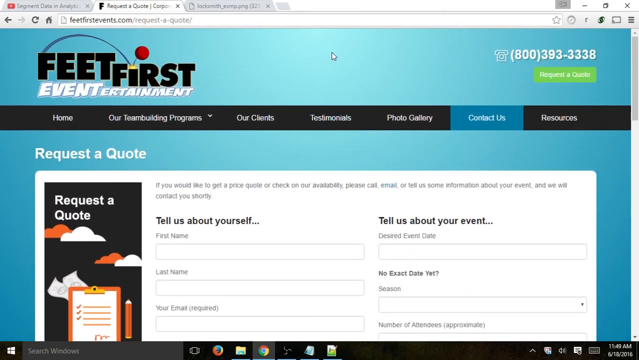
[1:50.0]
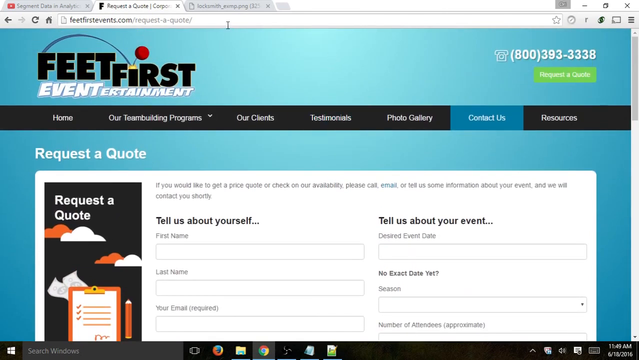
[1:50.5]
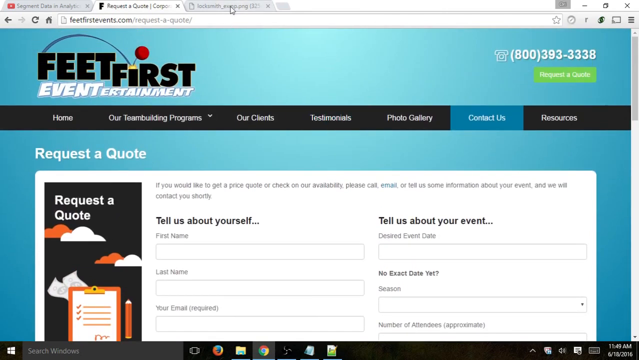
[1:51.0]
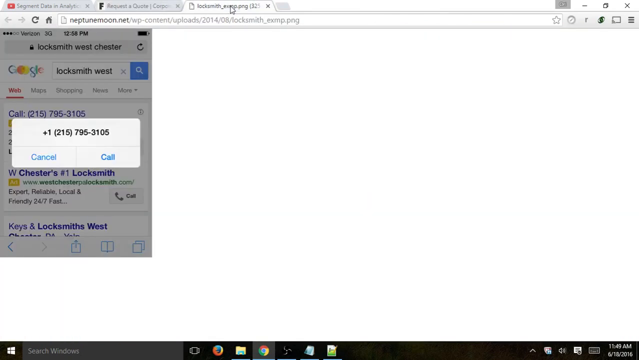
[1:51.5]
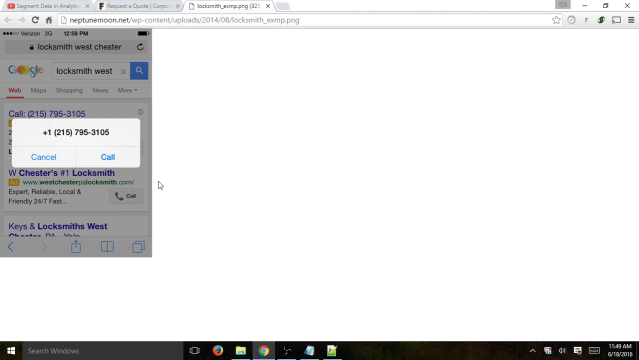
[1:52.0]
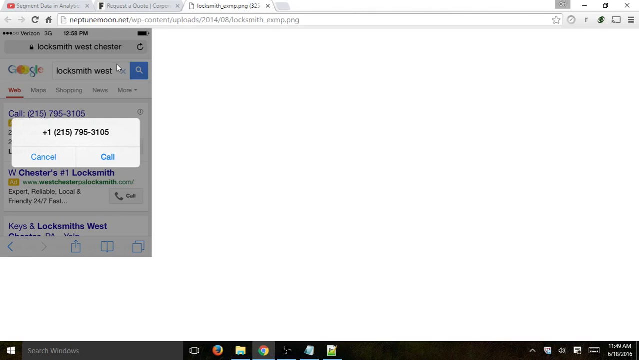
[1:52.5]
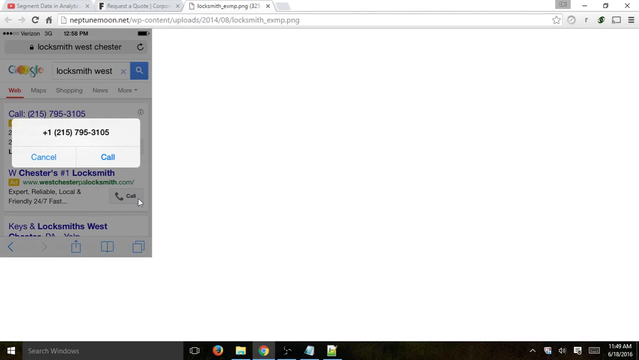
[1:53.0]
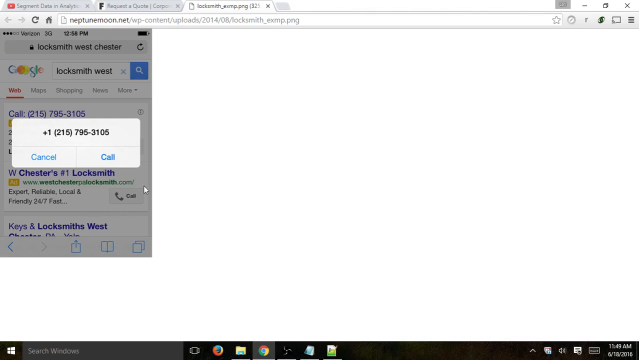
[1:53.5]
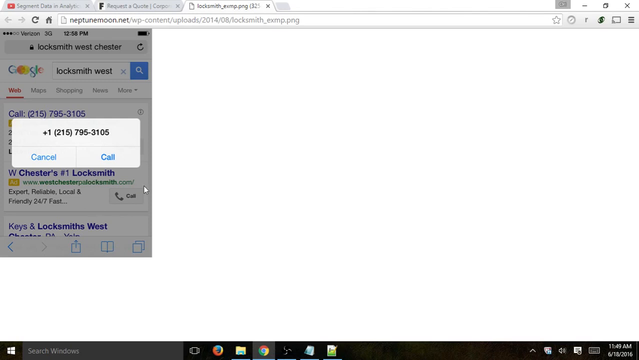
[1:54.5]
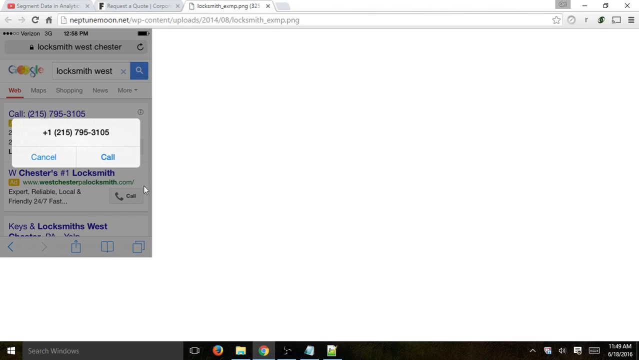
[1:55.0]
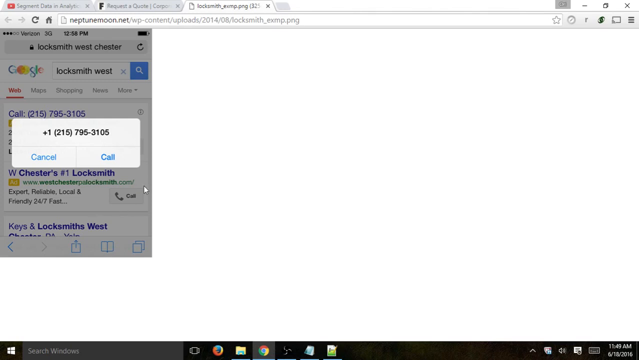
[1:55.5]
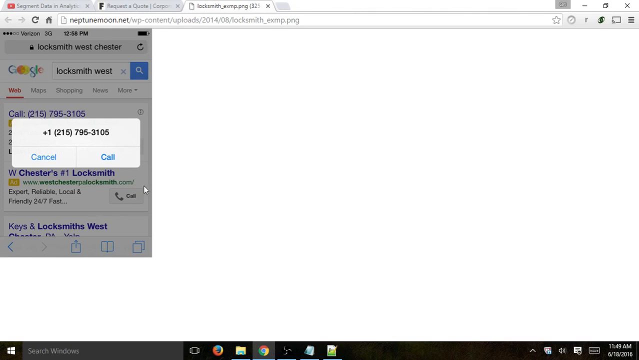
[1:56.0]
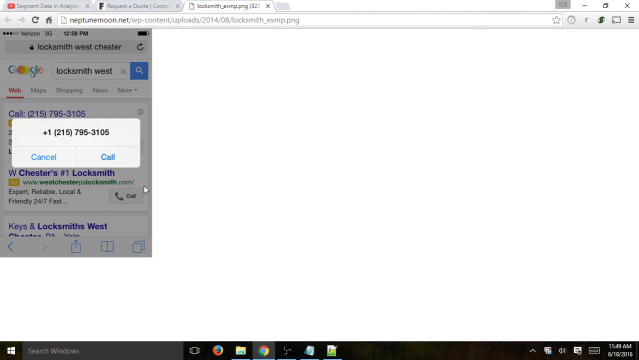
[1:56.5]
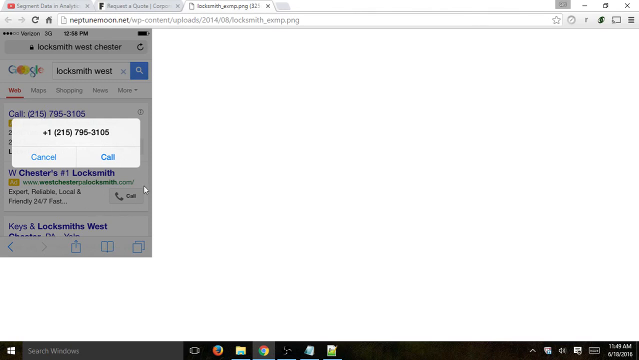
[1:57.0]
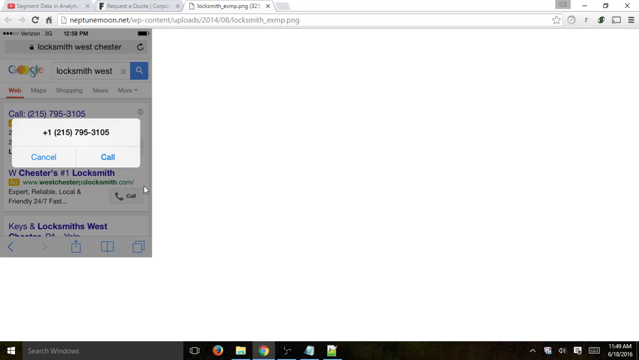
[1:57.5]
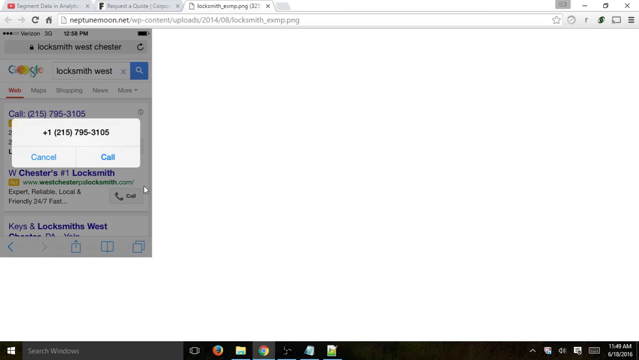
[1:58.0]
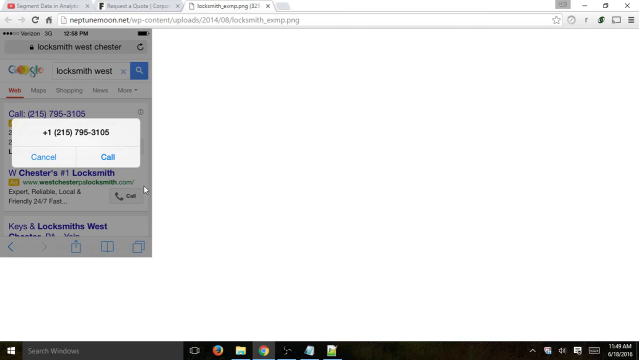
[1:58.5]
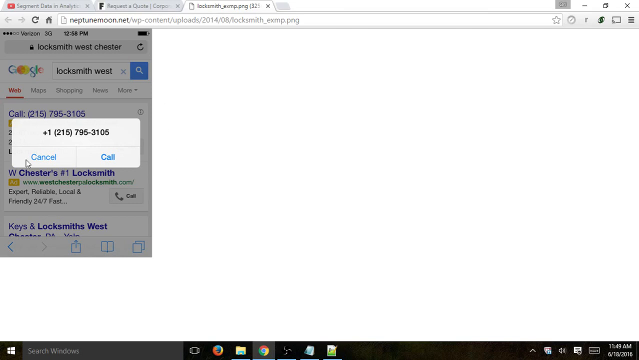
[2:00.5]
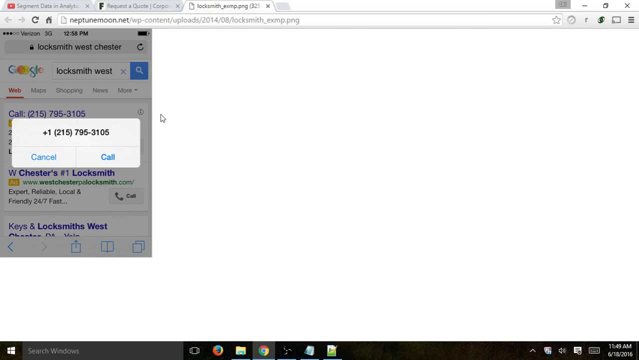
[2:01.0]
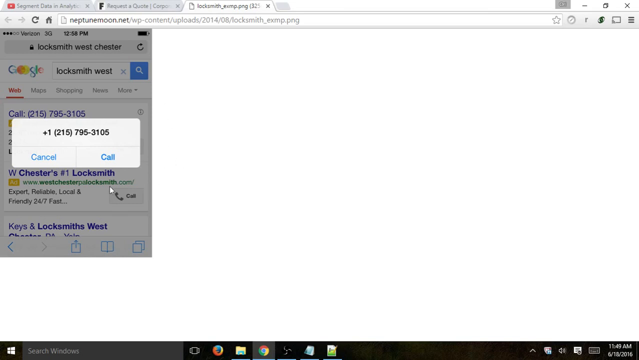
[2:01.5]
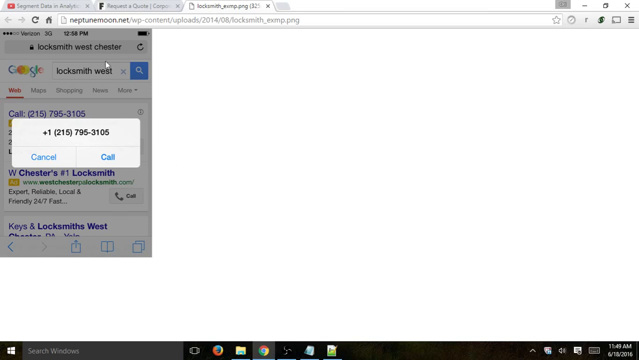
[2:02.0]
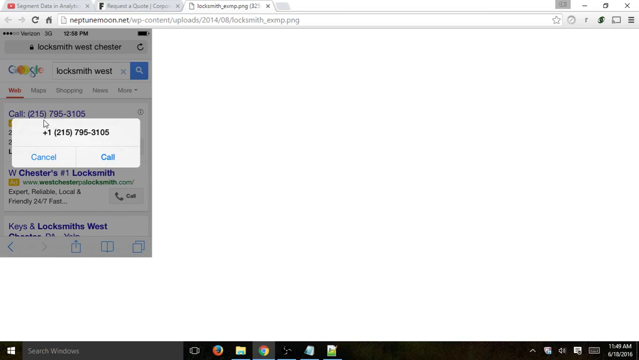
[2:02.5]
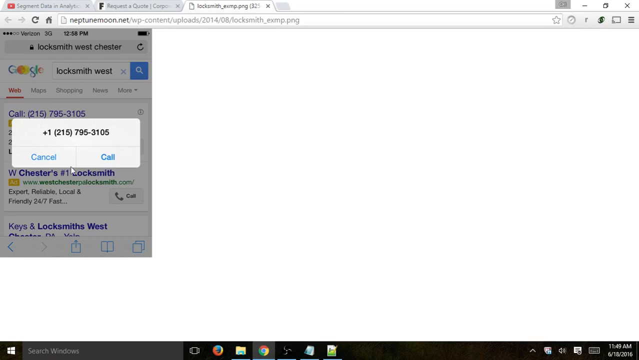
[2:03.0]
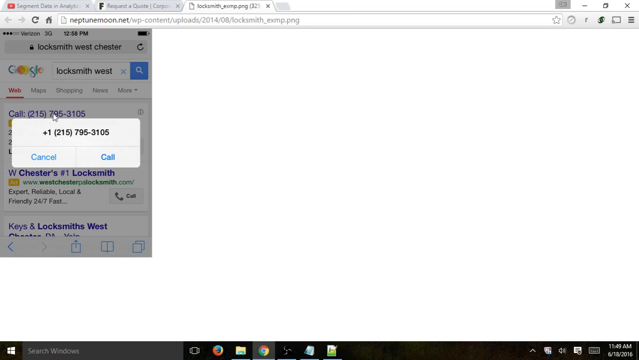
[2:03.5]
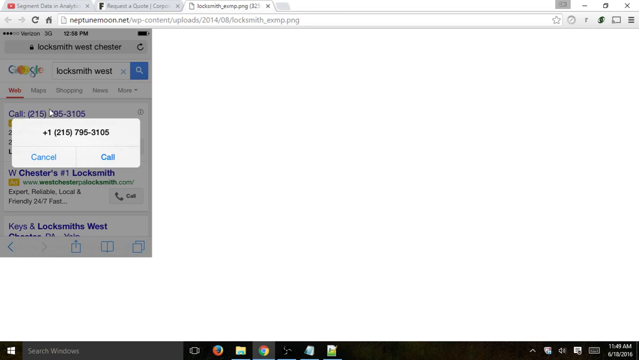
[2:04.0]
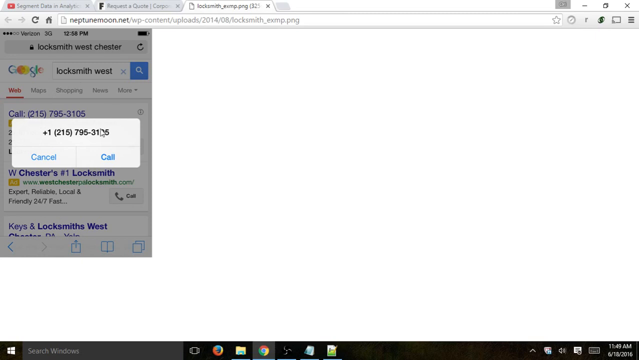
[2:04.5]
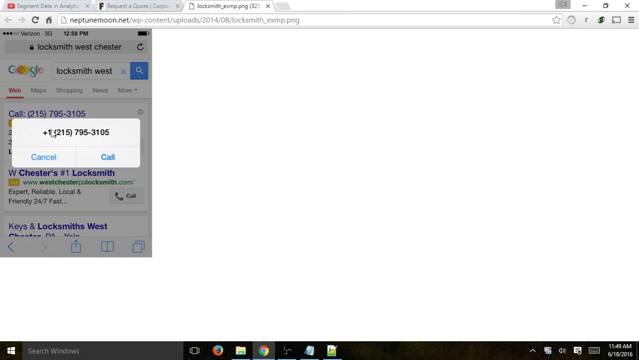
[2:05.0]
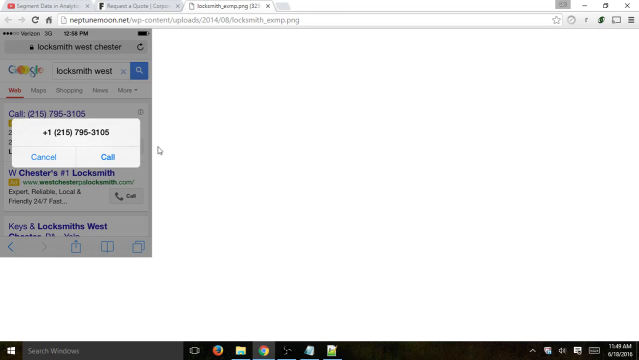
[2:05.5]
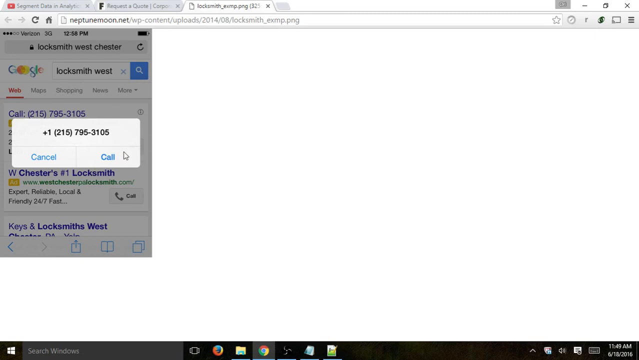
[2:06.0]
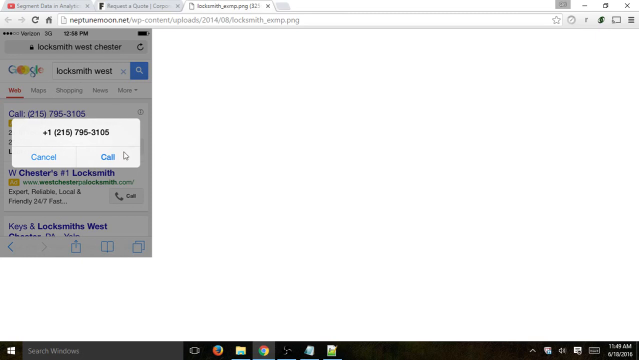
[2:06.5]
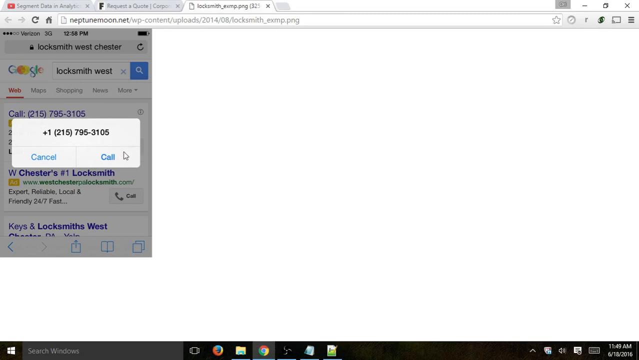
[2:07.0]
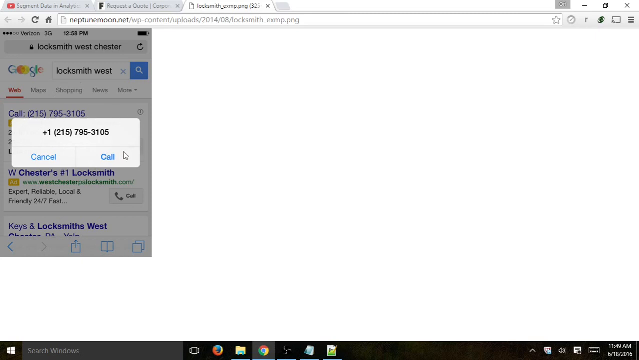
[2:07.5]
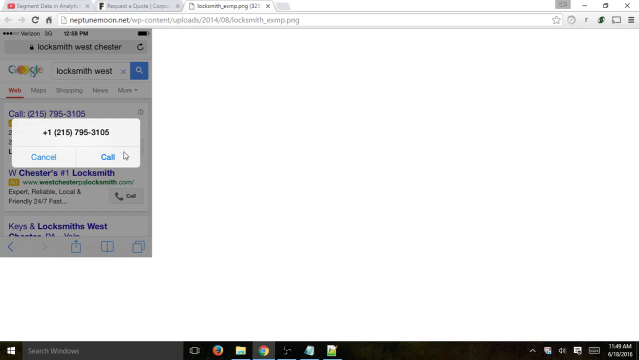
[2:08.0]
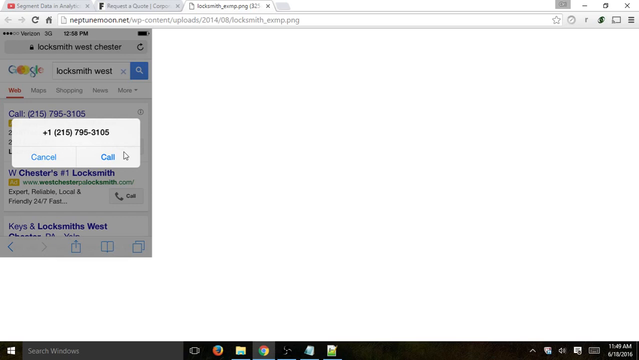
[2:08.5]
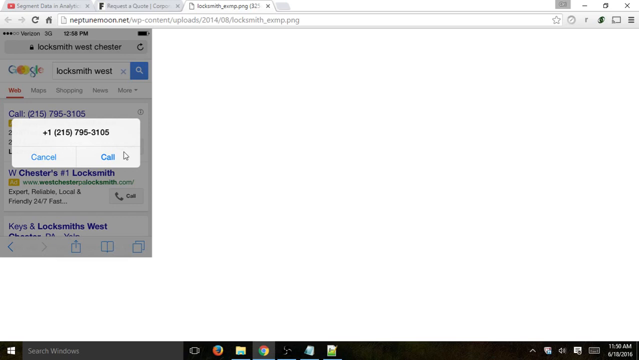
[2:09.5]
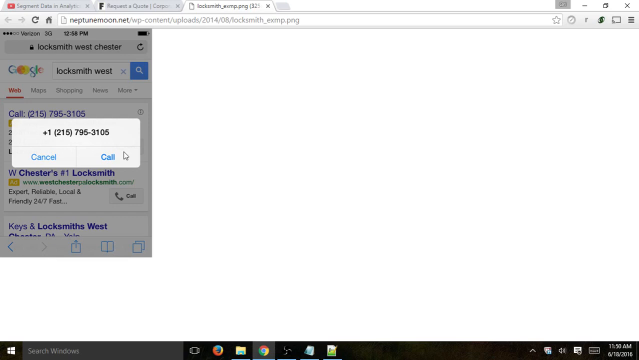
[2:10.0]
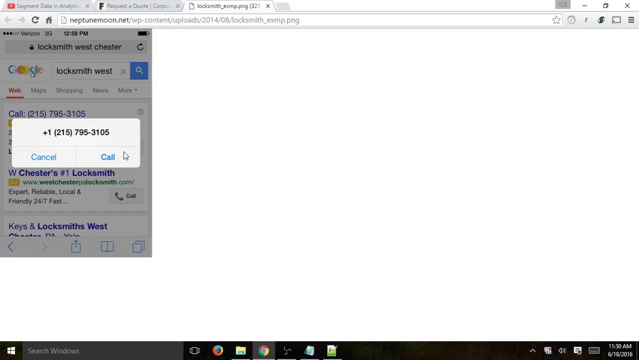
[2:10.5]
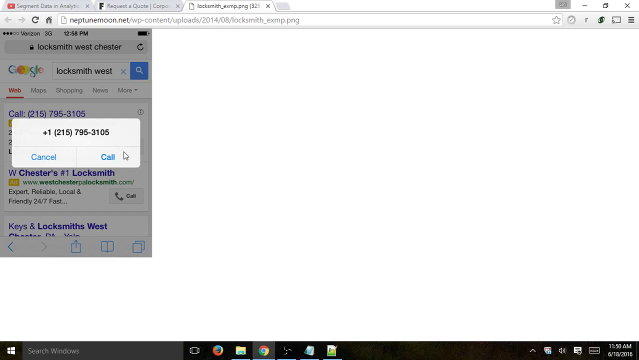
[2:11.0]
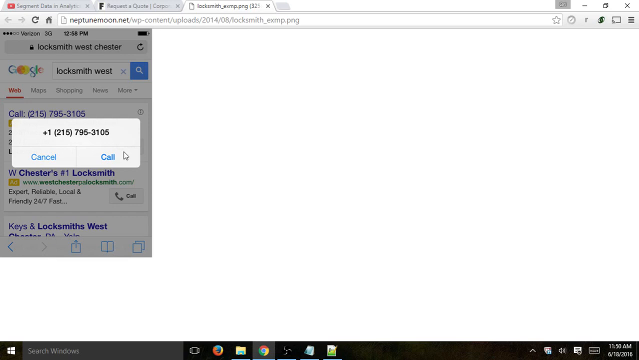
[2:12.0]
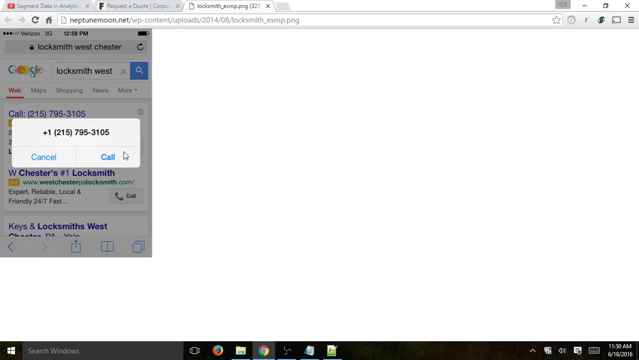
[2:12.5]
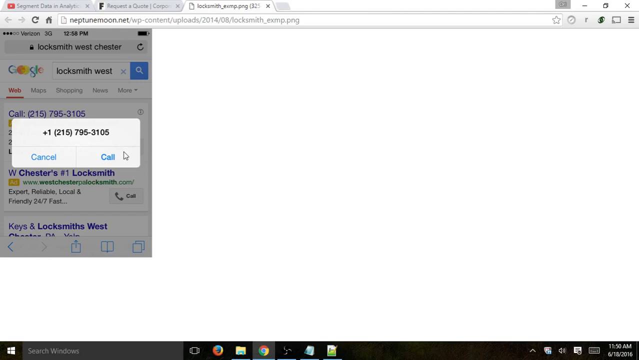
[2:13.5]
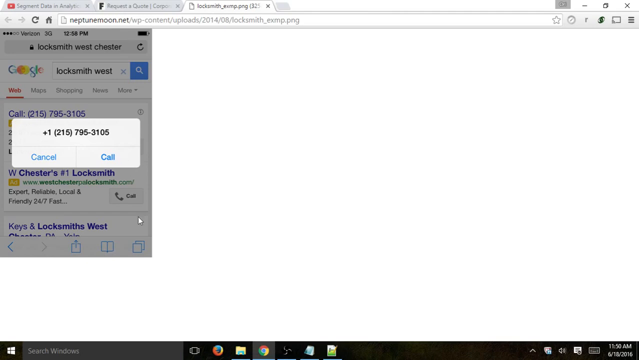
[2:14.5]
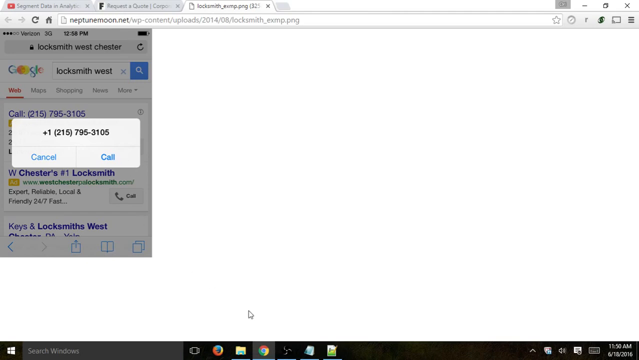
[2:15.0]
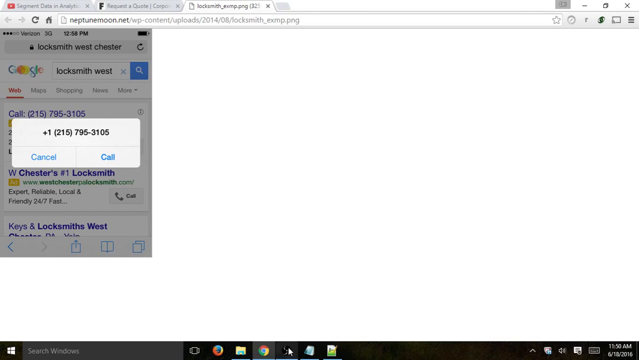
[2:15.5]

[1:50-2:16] Almost immediately the view switches to a different web page or tab showing a Google search for "Locksmith Westchester". The first entry reads "call: 215-795-3105". The cursor moves around and circles the number, then pushes the call button, which brings up a white pop-up box with a call option and a cancel option for that number; the same number appears in the pop-up as in the search results behind it. The cursor circles the call button.